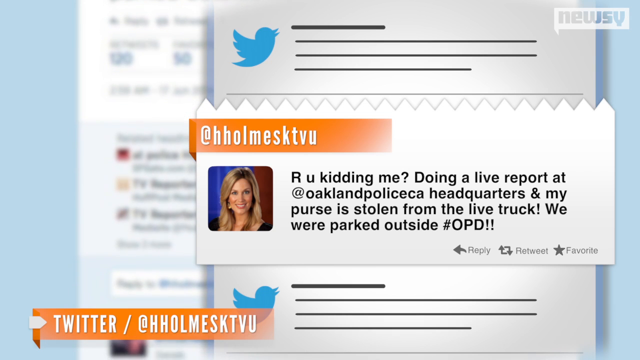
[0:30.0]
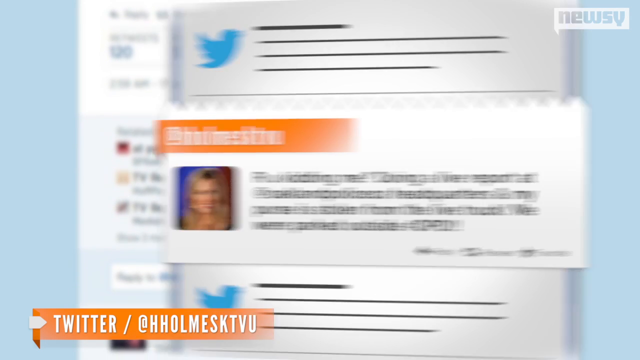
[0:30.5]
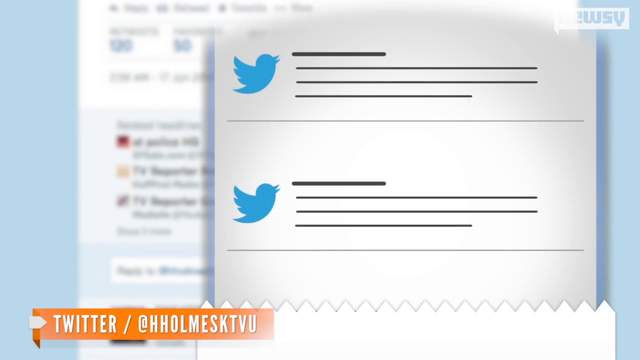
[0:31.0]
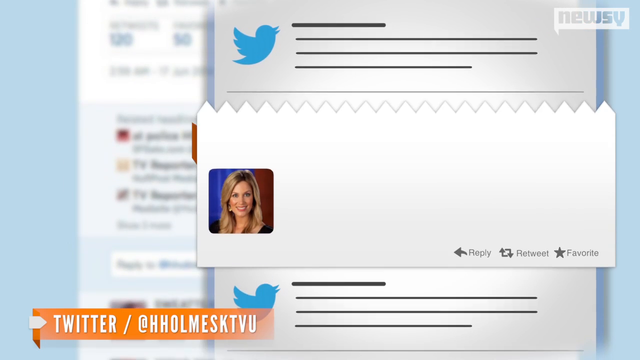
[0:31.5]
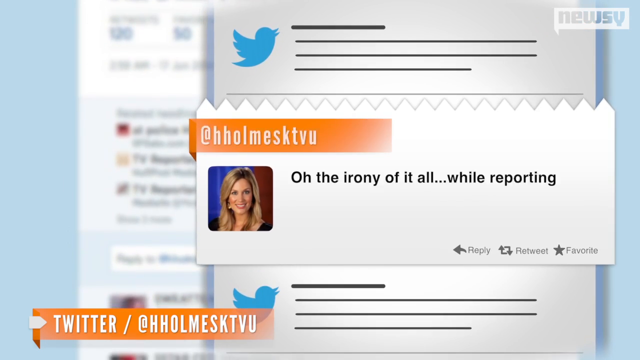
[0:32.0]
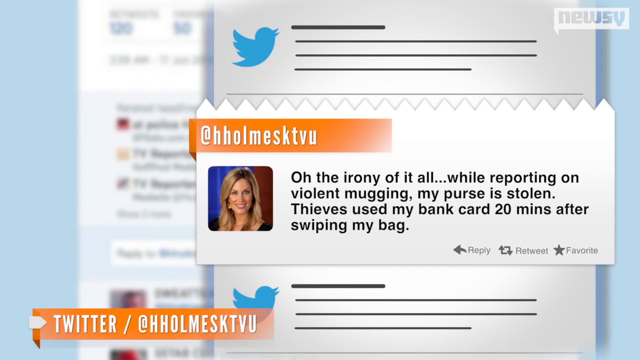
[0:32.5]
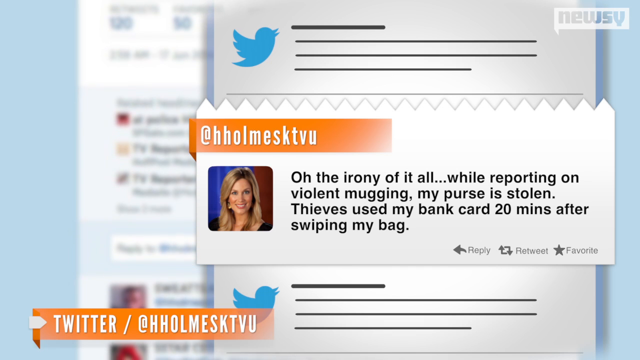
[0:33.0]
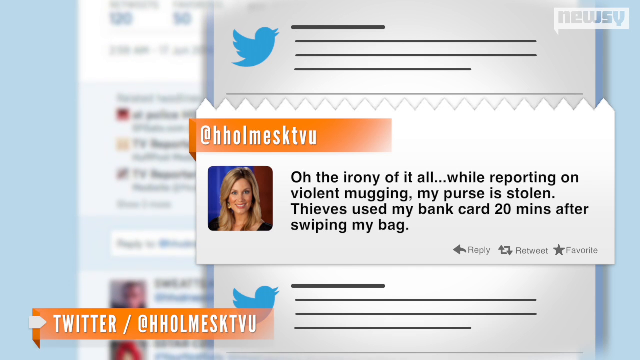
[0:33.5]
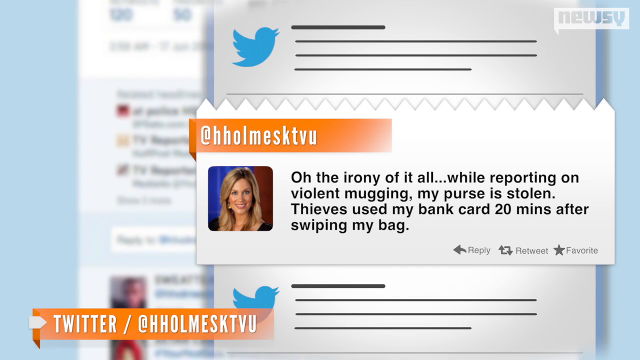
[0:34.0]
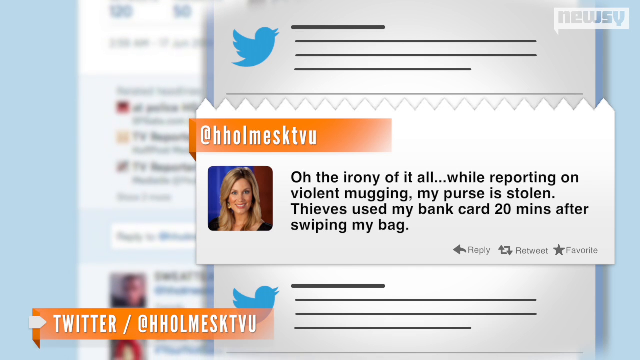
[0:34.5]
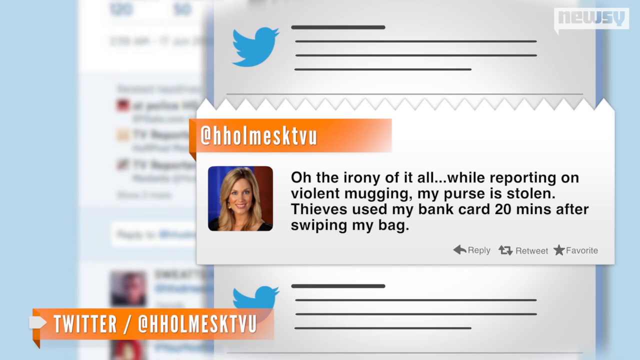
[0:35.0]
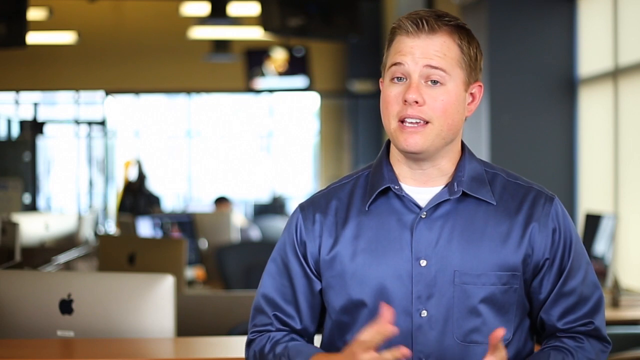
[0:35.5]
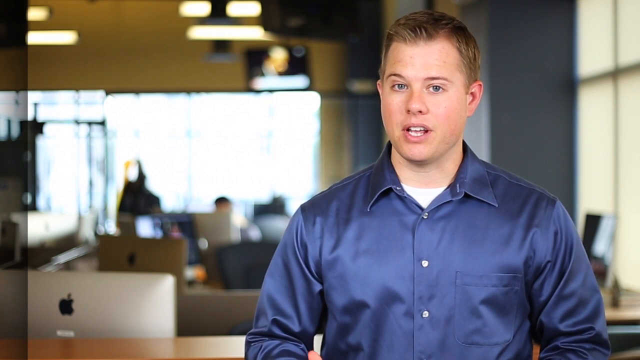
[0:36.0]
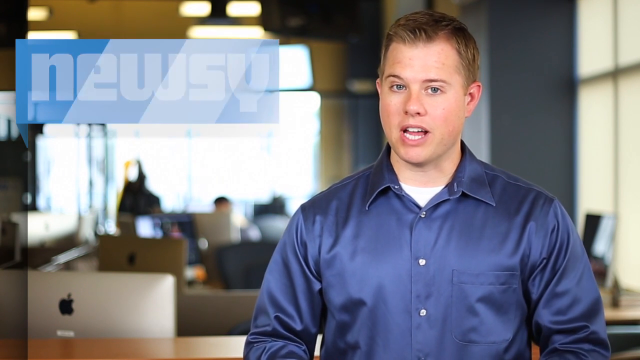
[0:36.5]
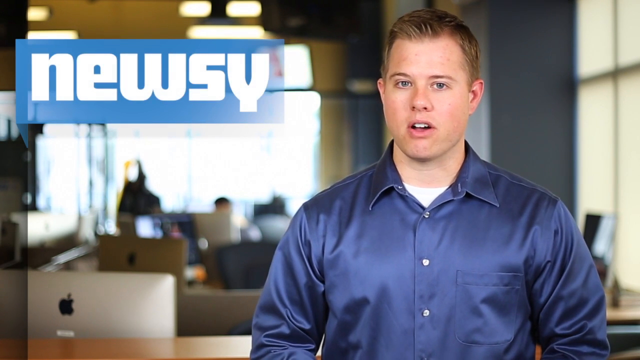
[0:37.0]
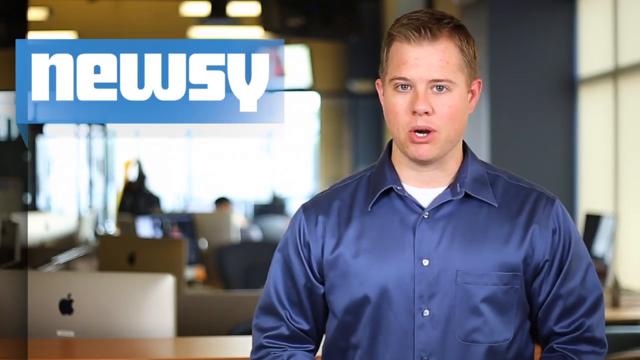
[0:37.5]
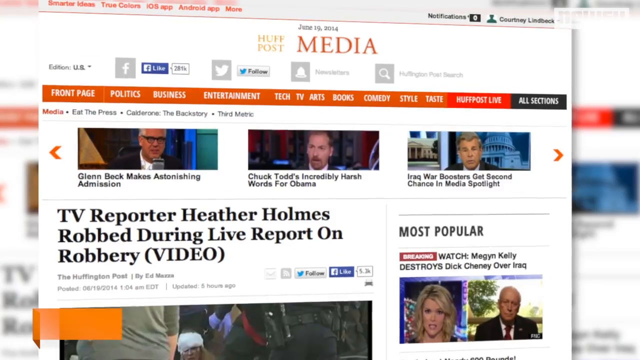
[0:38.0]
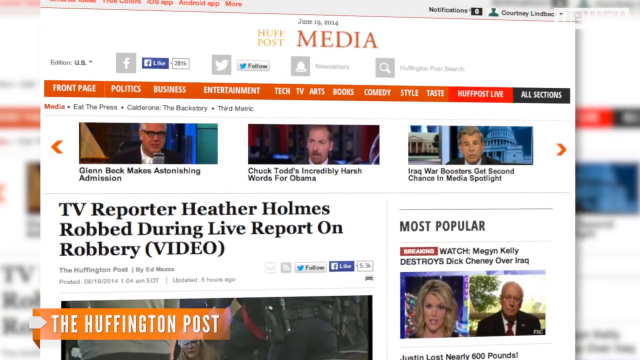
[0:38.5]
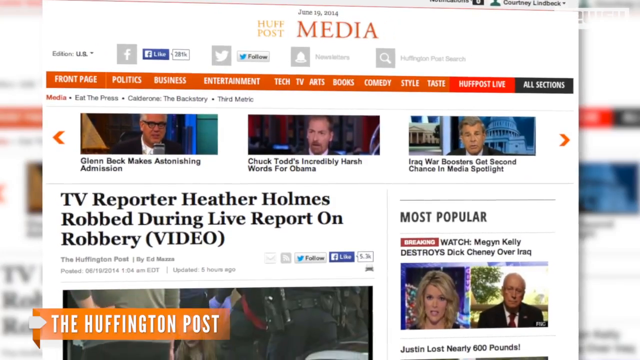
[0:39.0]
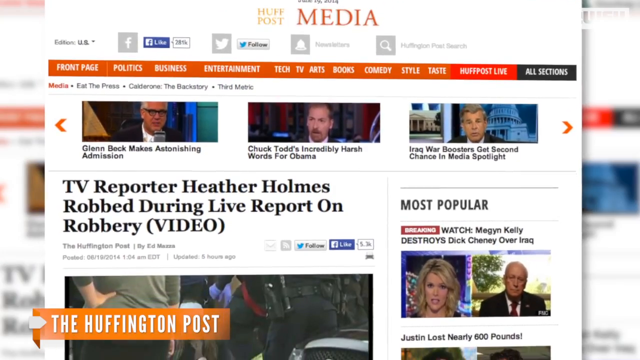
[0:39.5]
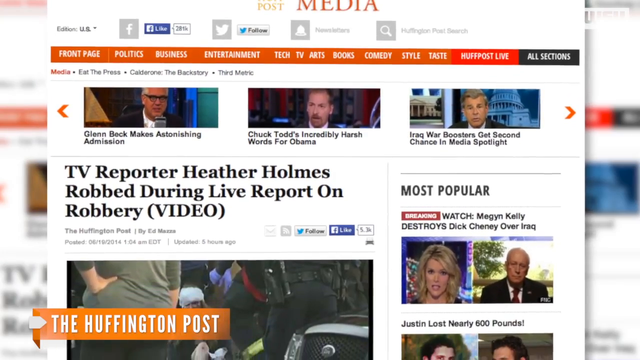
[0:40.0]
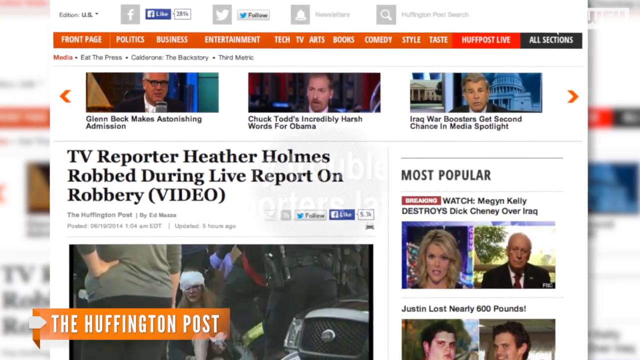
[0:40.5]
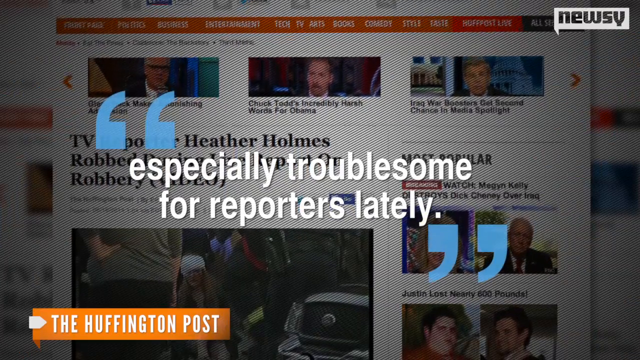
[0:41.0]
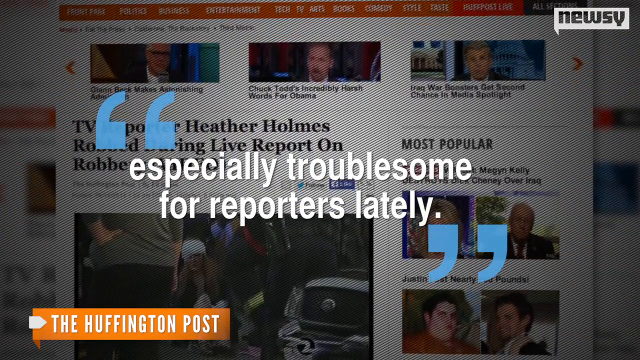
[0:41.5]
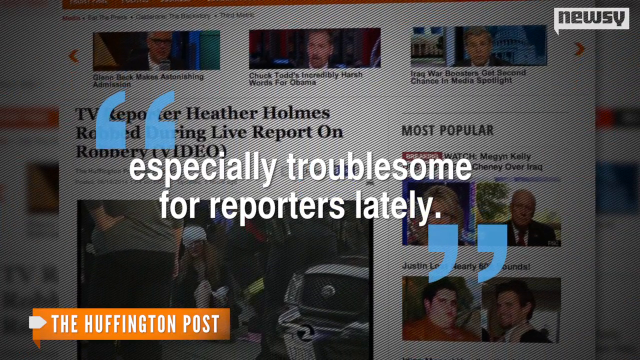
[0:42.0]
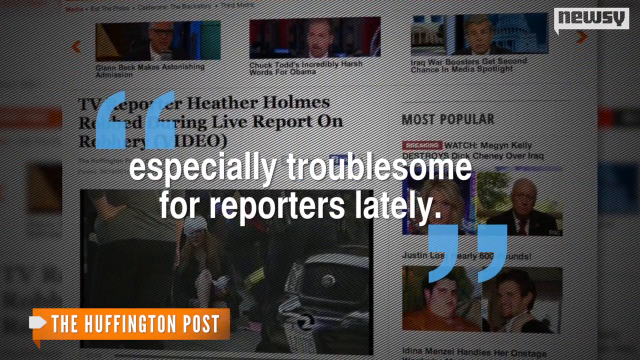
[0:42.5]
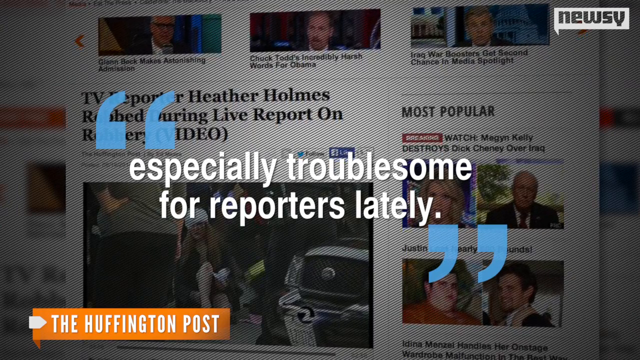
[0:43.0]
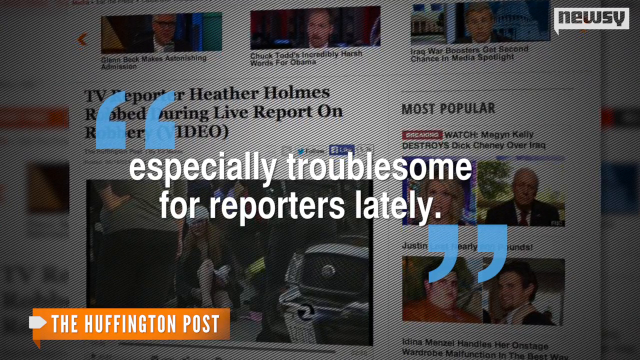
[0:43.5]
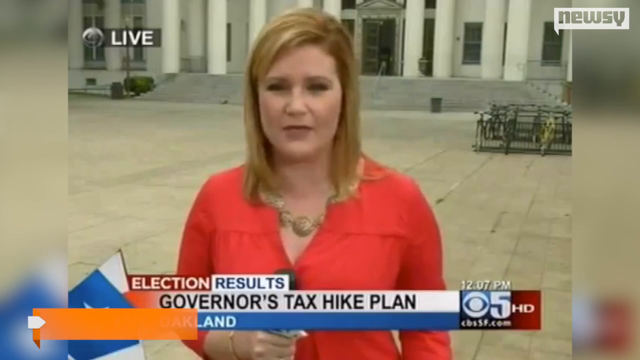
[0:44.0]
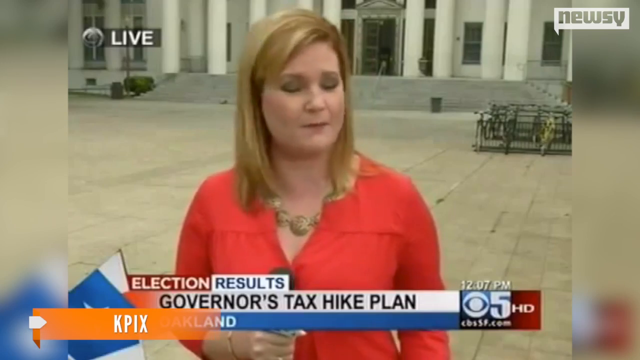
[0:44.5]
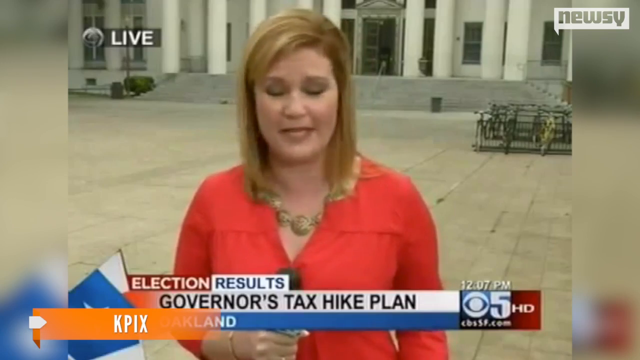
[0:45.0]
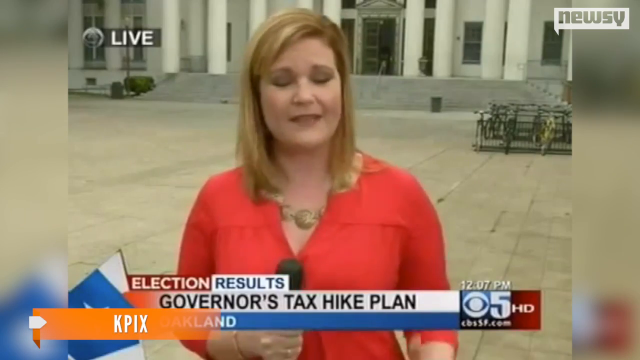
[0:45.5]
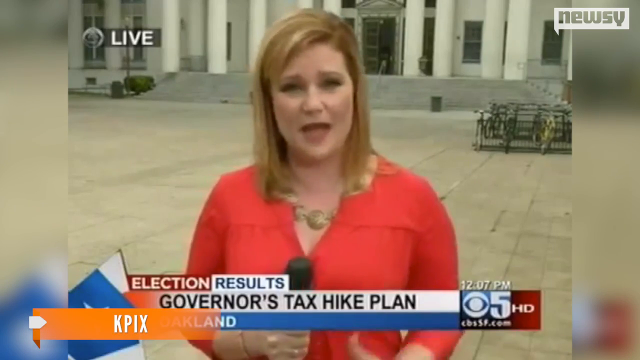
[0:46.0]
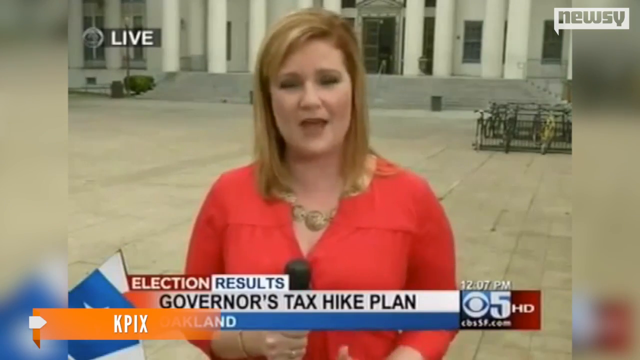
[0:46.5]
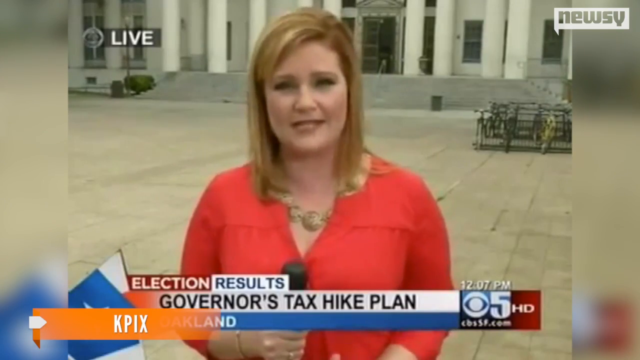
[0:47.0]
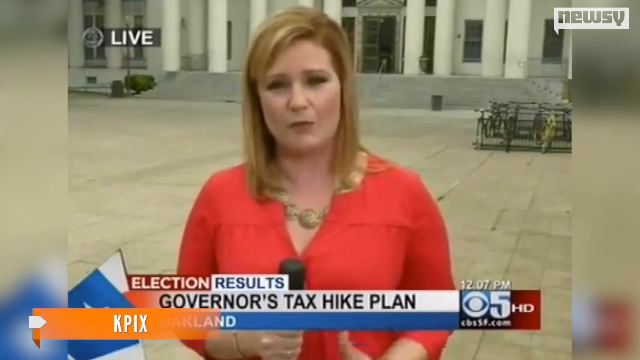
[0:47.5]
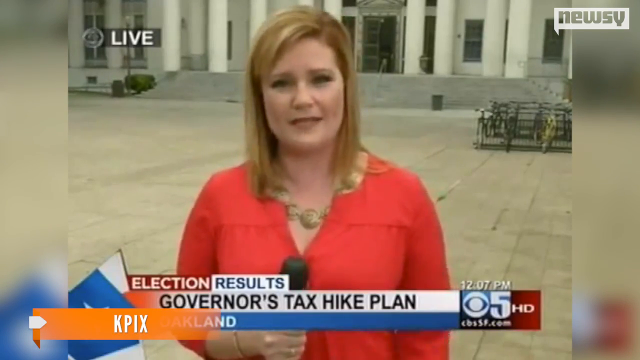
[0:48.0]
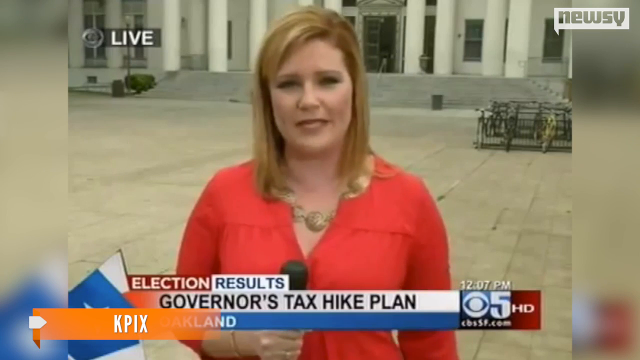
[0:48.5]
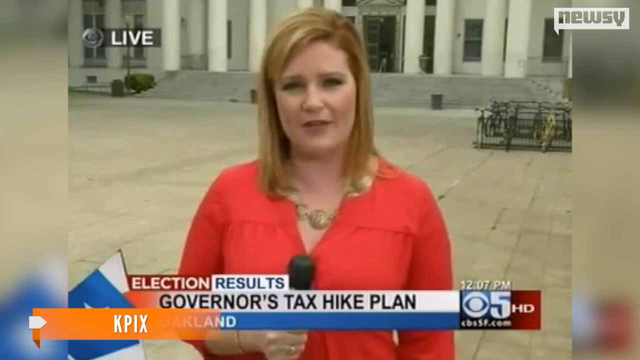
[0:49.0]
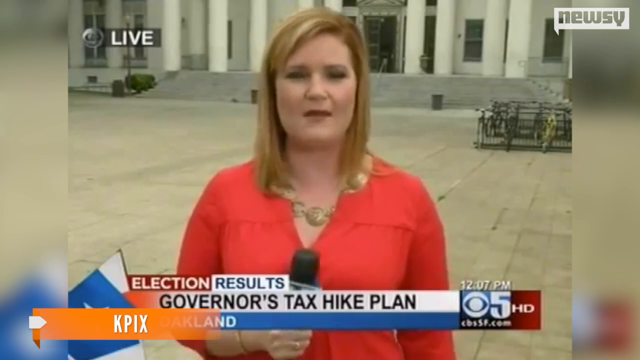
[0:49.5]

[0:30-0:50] The Twitter post switches to another post by the same woman, reading "Oh, the irony of it all, while reporting on violent mugging. My purse is stolen. Thieves used my bank card. 20 minutes later, after swiping my bag." It is shown on Twitter with the same edit as before, her picture in the center of the screen. The video returns to the office setting with the blonde man from before, who comments, while the Newsy logo is in the upper left corner of the screen. It then cuts to a picture of a HuffPost Media page with the headline "TV reporter Heather Holmes robbed during live report on robbery video", and another quote appears on the screen: "It's especially troublesome for reporters lately." Next the reporter appears, talking to the camera and holding a microphone in front of her. Behind her is some kind of building and a lot of open space; the building is white and seems to be made of stone or something similar.